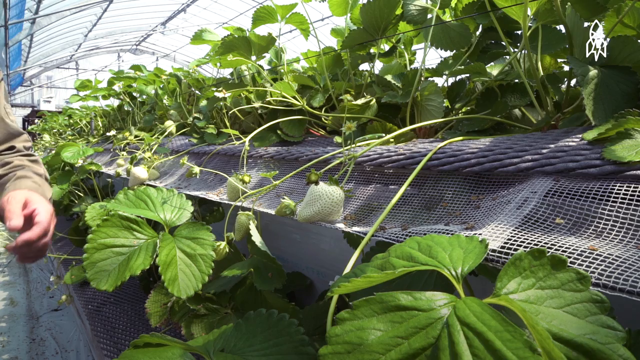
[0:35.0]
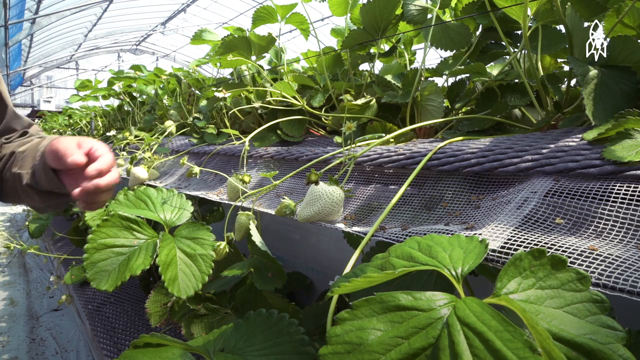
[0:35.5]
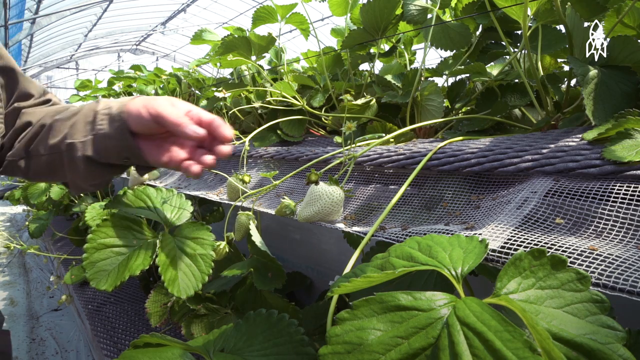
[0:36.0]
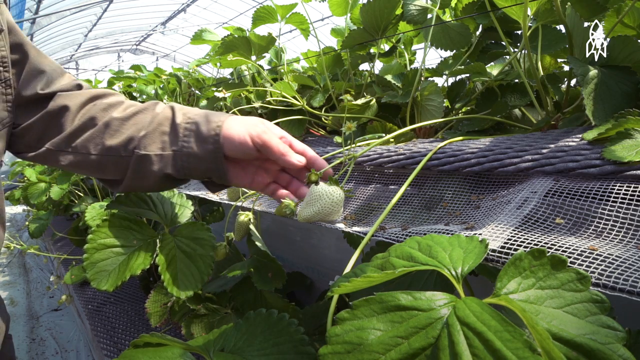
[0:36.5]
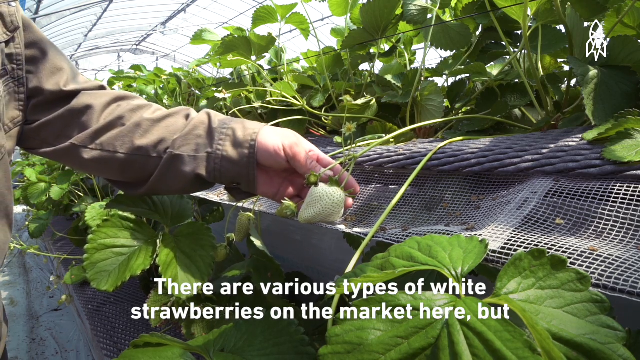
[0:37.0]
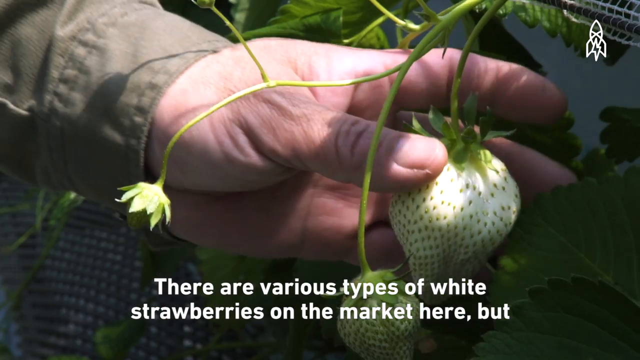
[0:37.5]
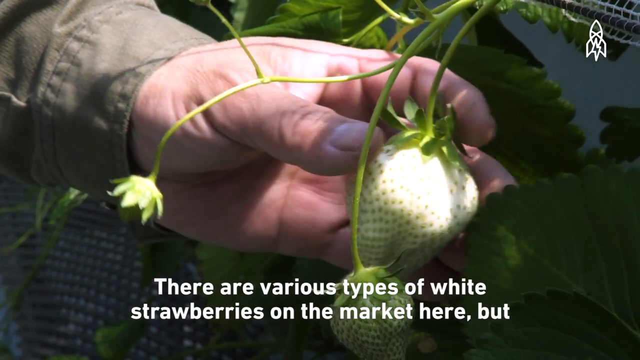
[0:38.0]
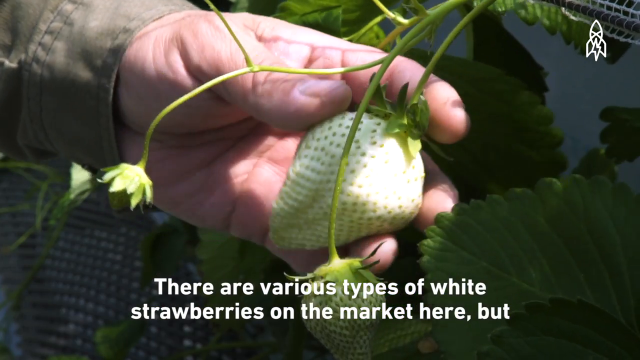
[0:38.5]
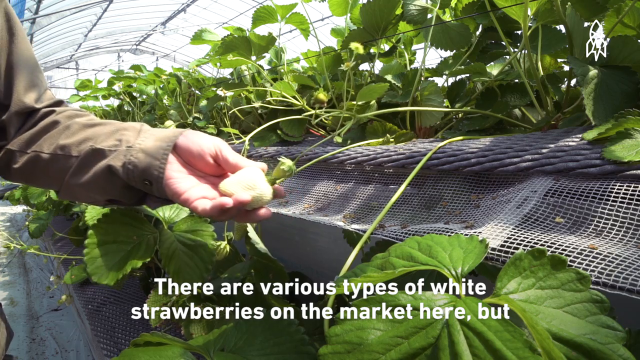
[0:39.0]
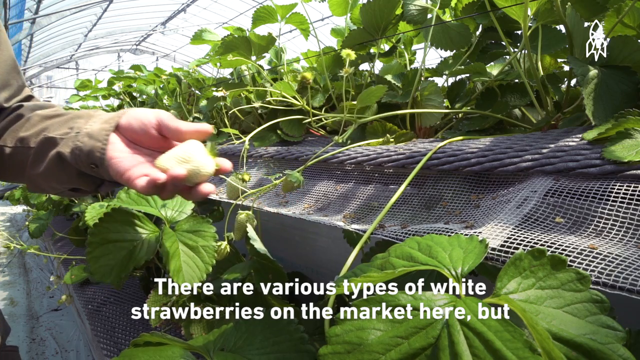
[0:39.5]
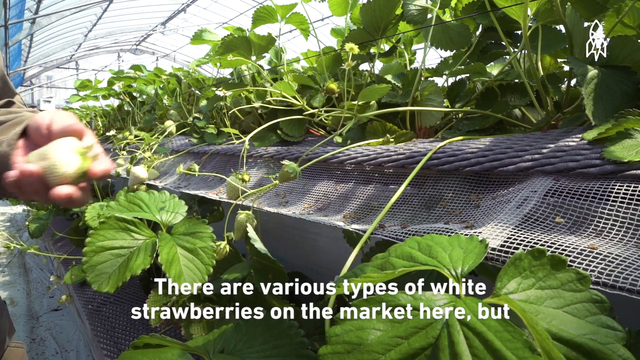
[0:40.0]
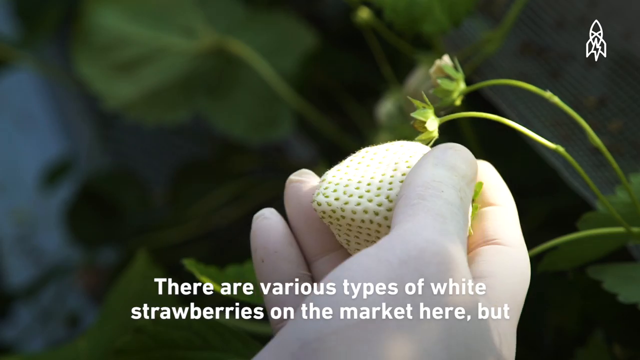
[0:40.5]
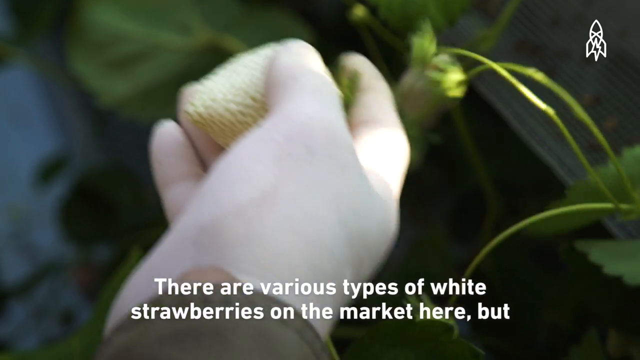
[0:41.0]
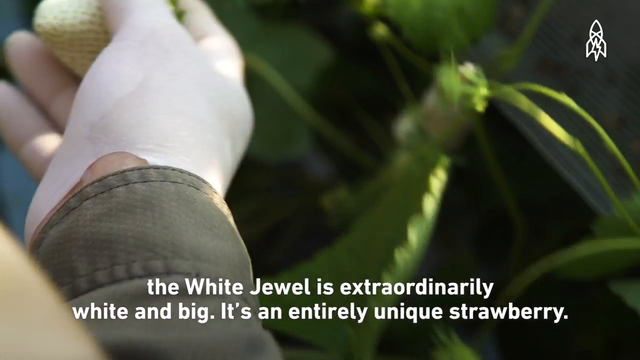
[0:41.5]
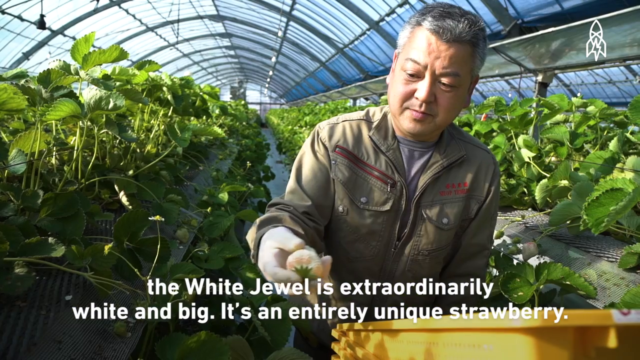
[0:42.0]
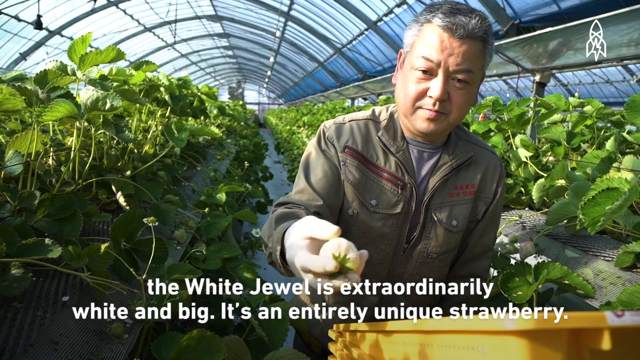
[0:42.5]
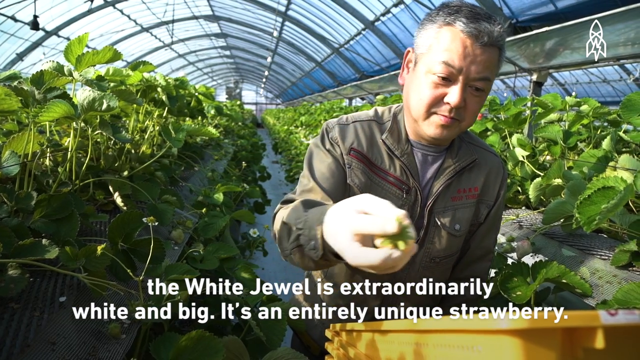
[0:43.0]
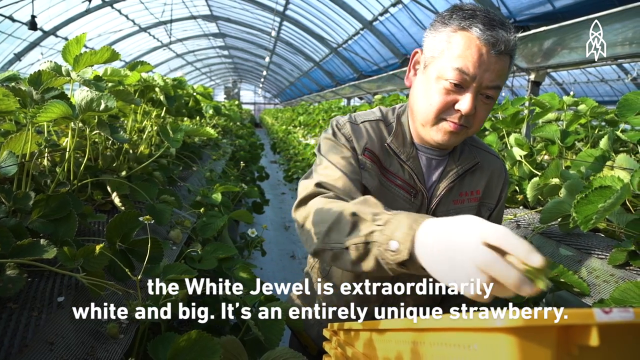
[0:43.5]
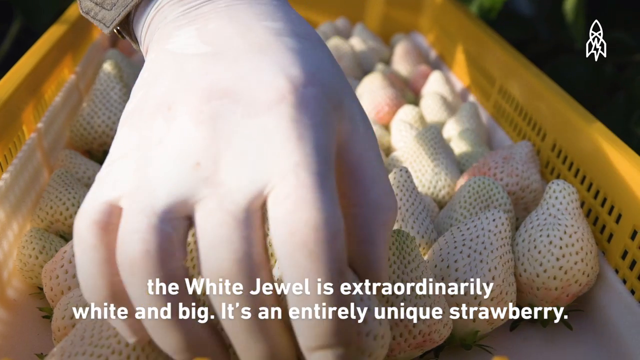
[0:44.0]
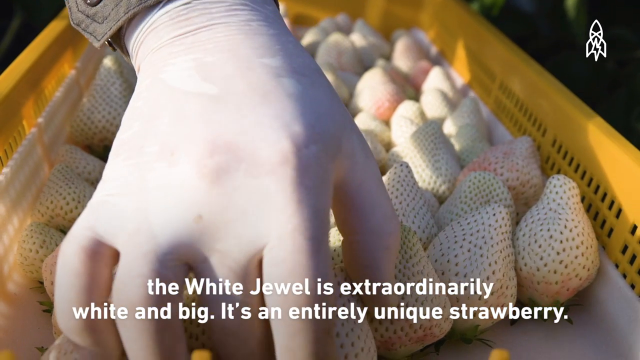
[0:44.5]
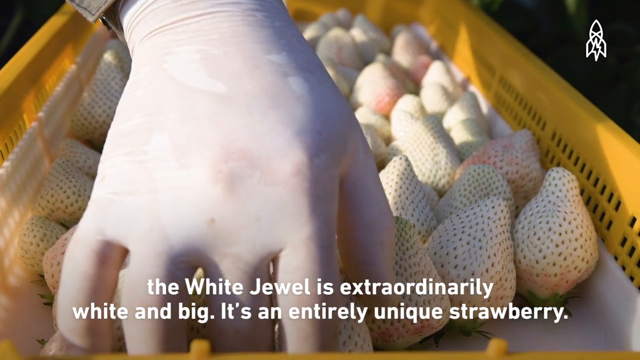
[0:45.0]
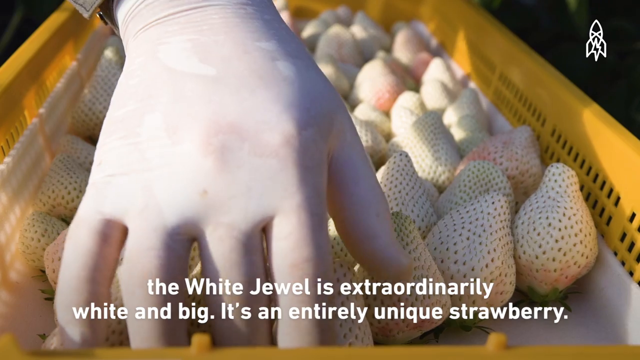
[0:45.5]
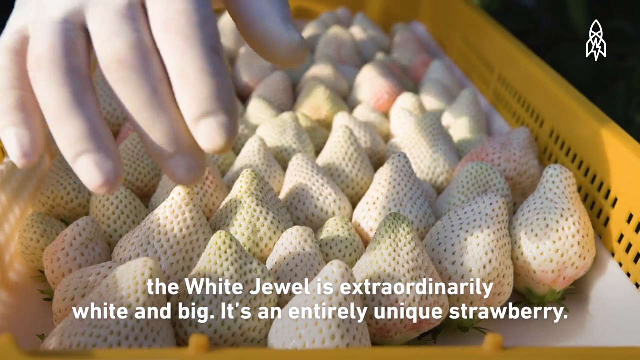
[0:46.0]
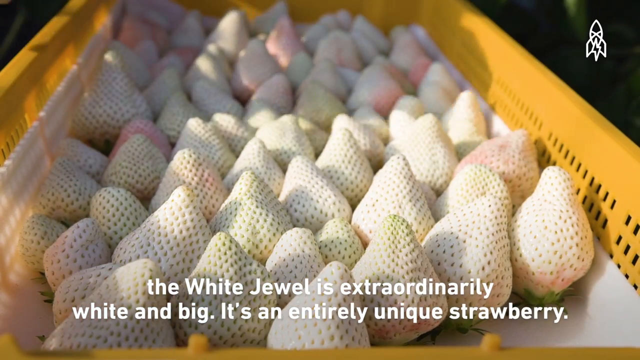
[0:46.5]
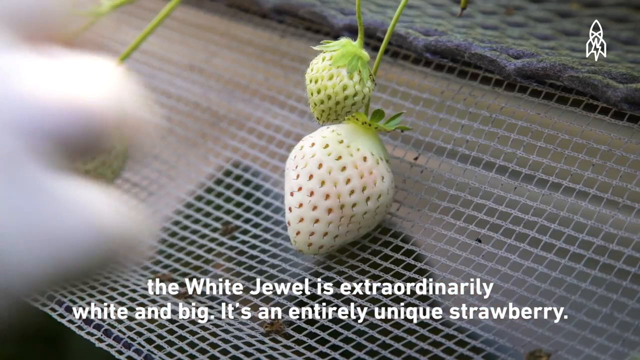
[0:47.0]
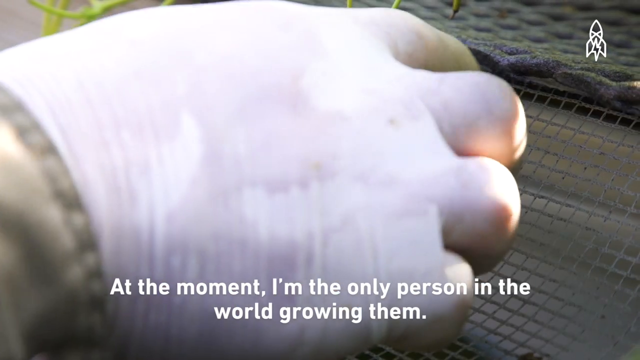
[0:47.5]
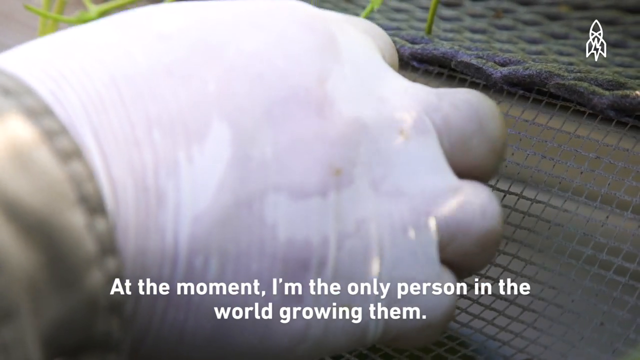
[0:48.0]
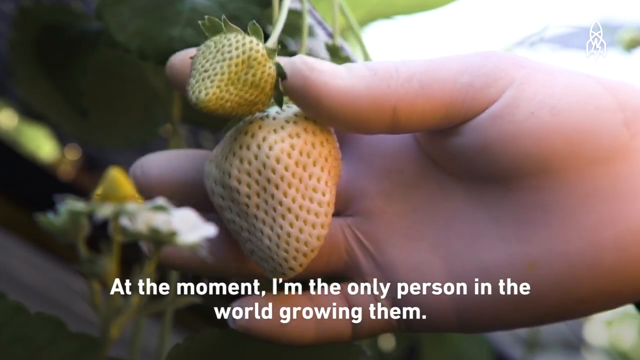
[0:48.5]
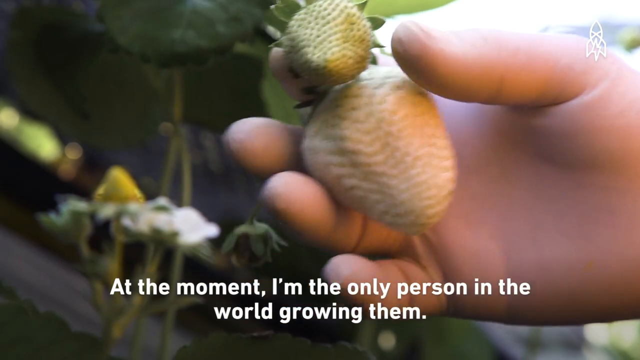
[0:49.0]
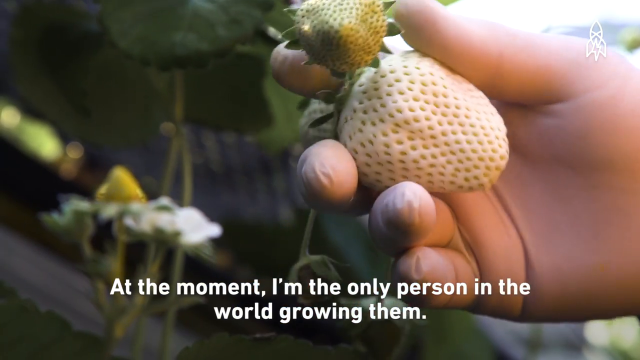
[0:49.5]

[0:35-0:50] Mr. Tashima, a gray-haired man of Asian descent in a brown gardening outfit, demonstrates picking strawberries off the branches while wearing white latex gloves. The greenhouse is flourishing and the strawberries seem to be doing very well. He places the white jewel strawberries into a netted bin that probably helps clean them. His white strawberry yield is large.